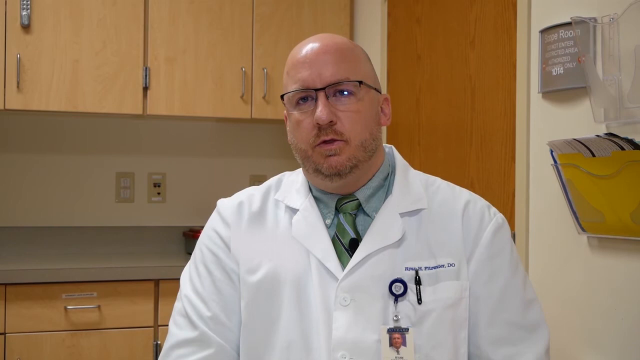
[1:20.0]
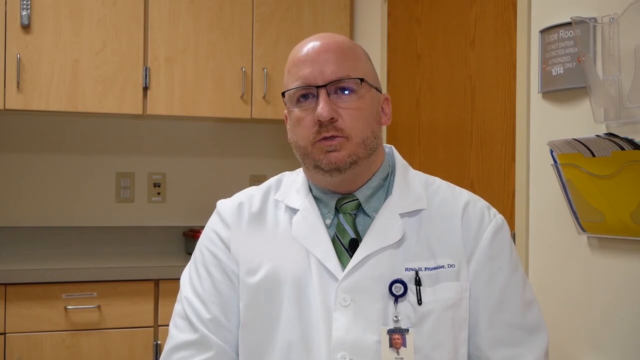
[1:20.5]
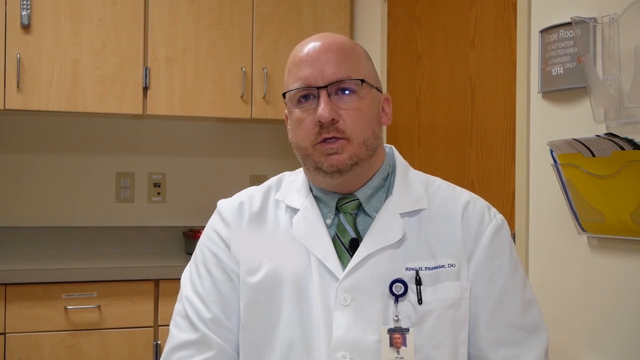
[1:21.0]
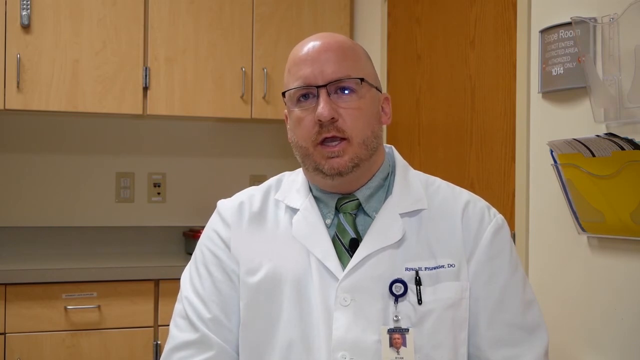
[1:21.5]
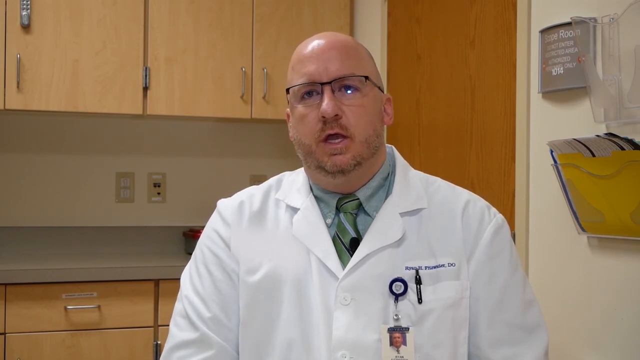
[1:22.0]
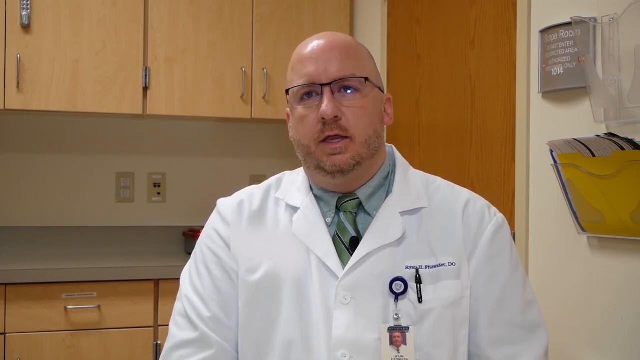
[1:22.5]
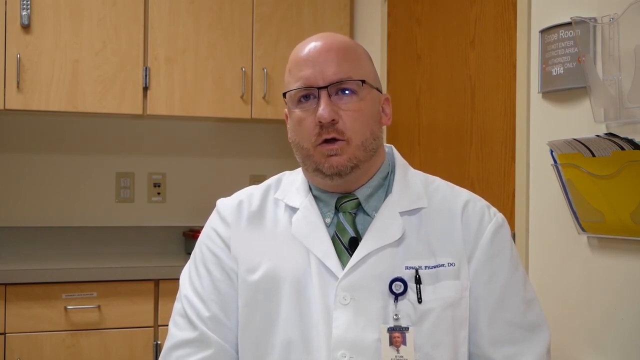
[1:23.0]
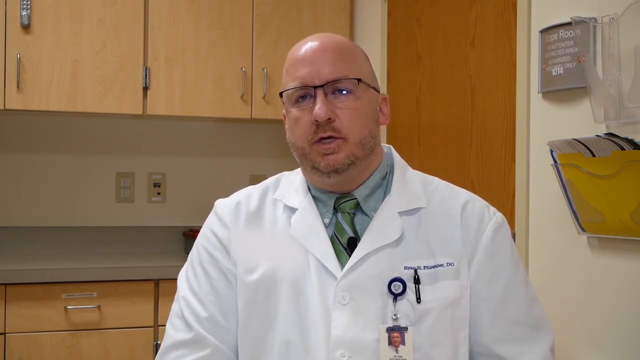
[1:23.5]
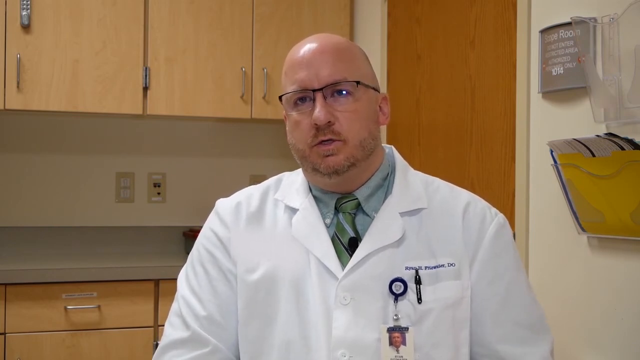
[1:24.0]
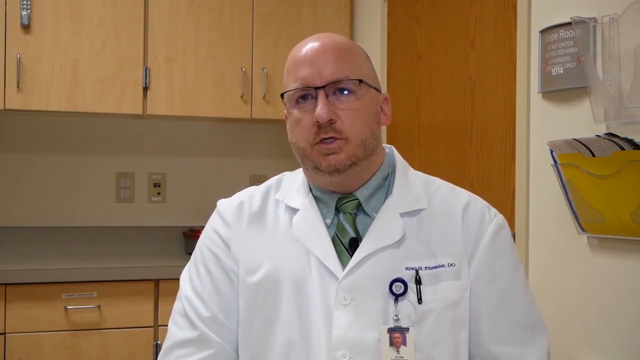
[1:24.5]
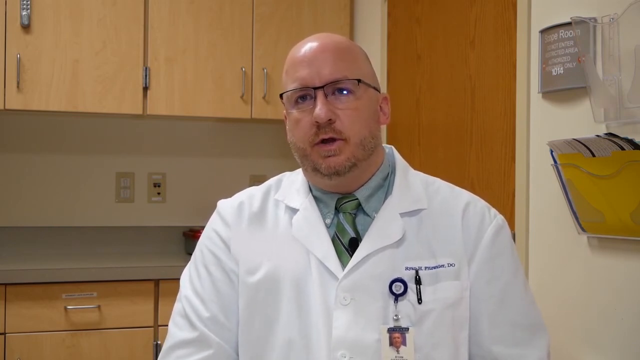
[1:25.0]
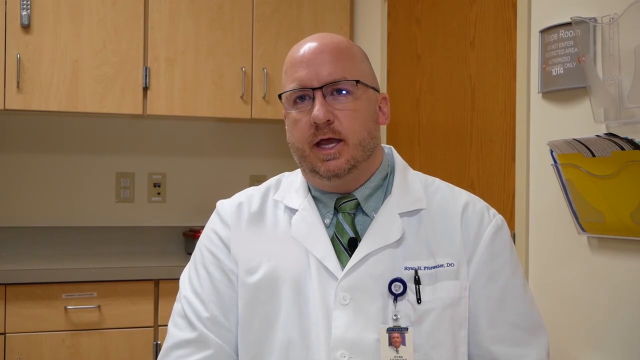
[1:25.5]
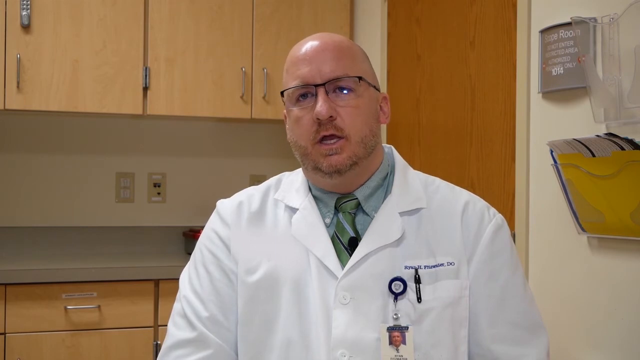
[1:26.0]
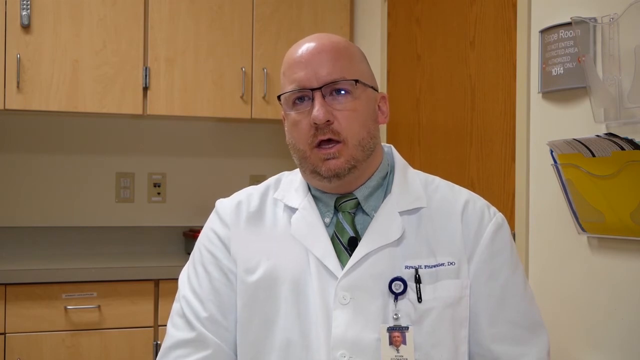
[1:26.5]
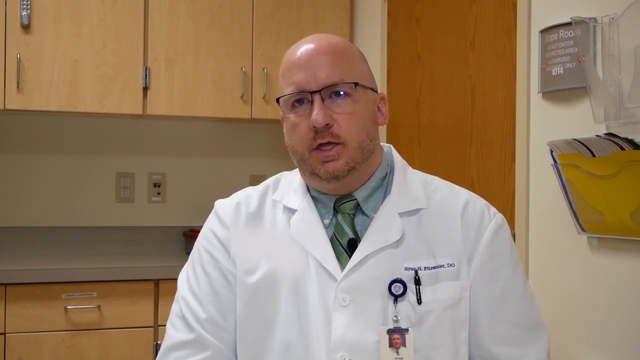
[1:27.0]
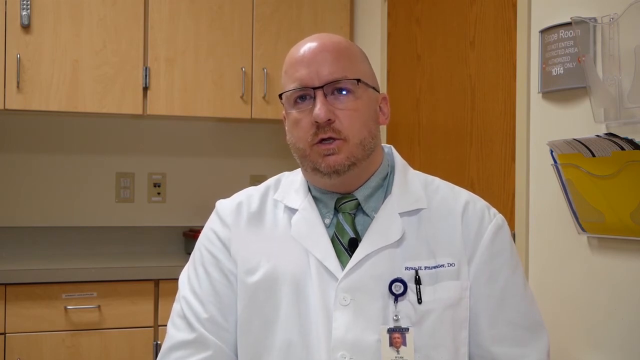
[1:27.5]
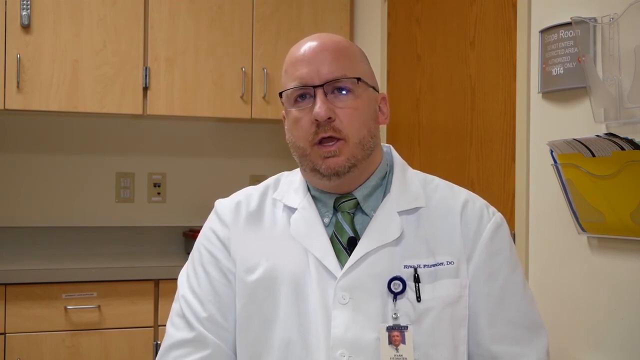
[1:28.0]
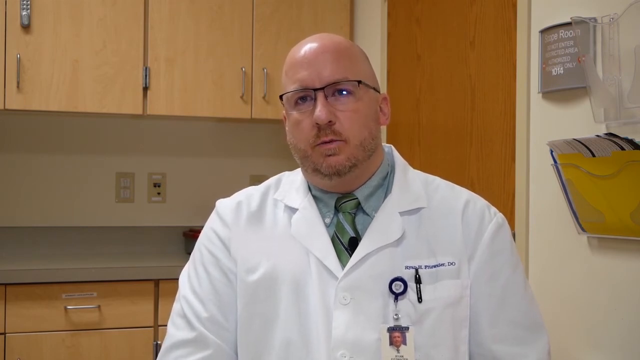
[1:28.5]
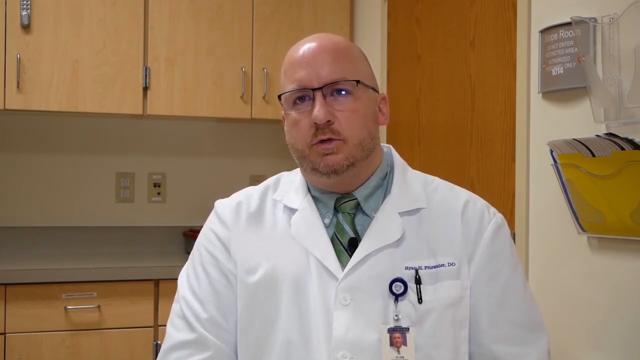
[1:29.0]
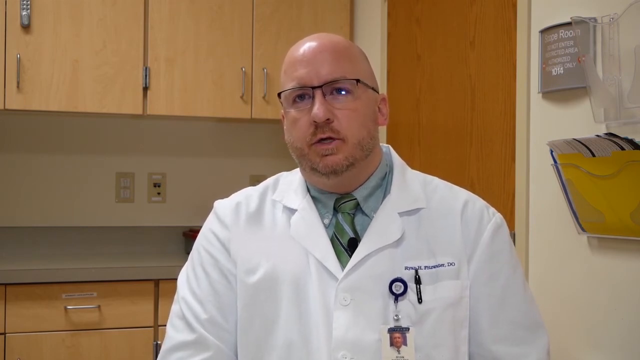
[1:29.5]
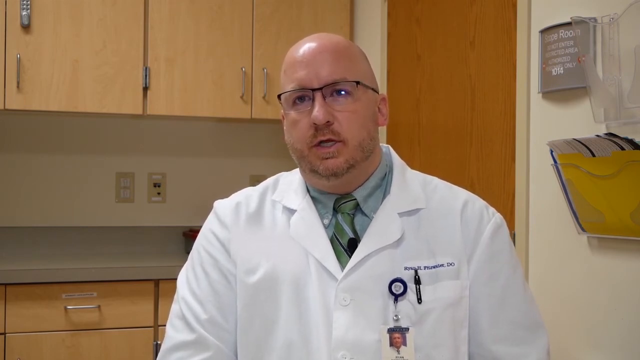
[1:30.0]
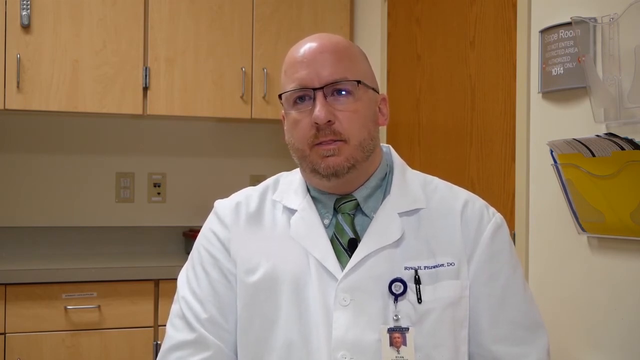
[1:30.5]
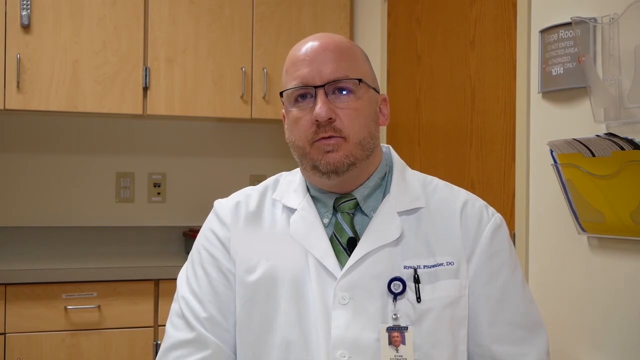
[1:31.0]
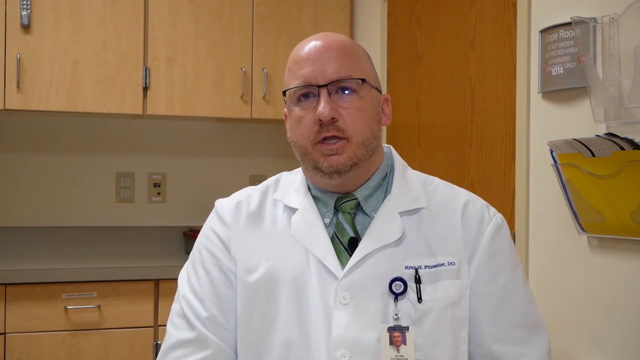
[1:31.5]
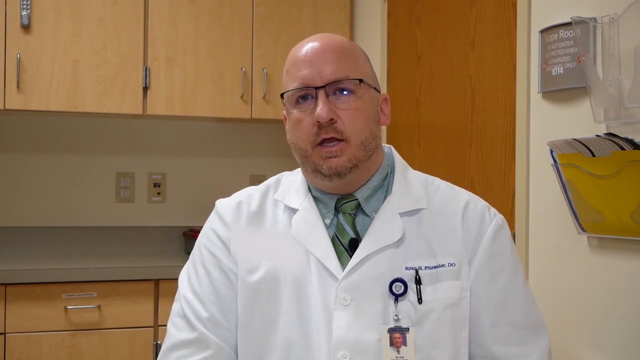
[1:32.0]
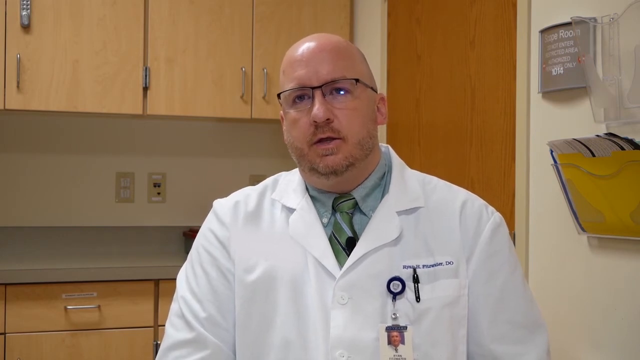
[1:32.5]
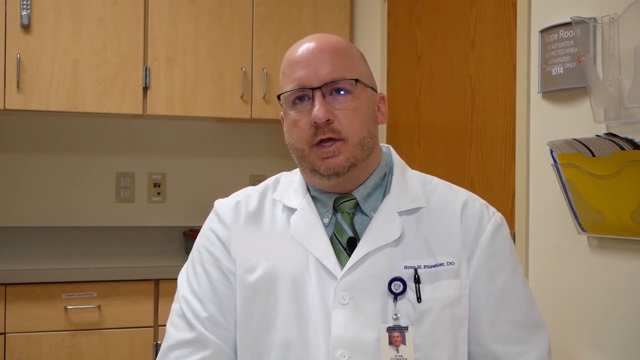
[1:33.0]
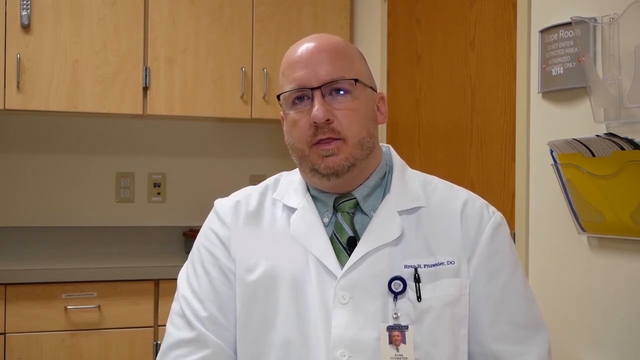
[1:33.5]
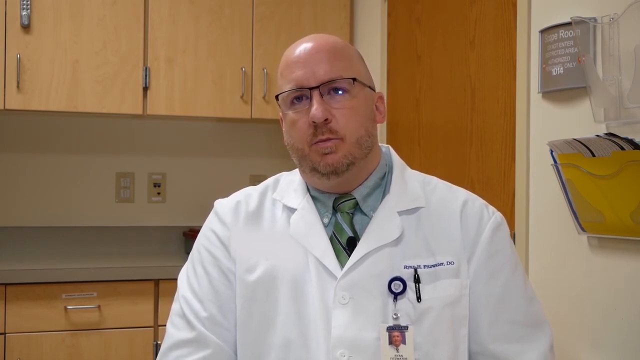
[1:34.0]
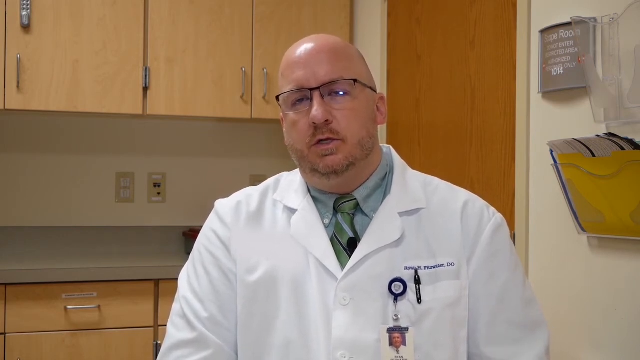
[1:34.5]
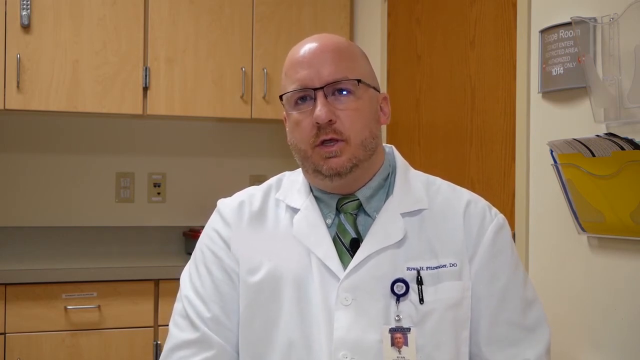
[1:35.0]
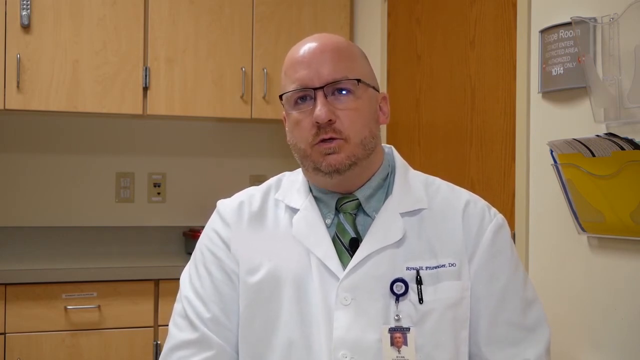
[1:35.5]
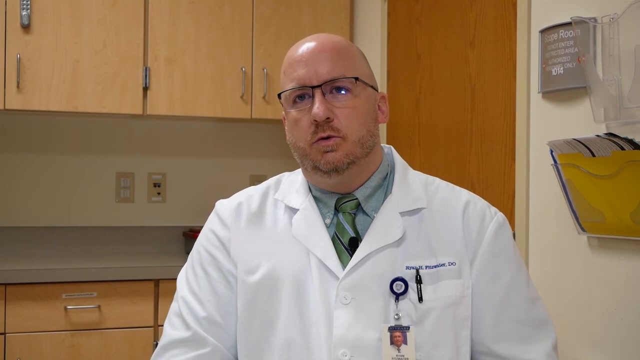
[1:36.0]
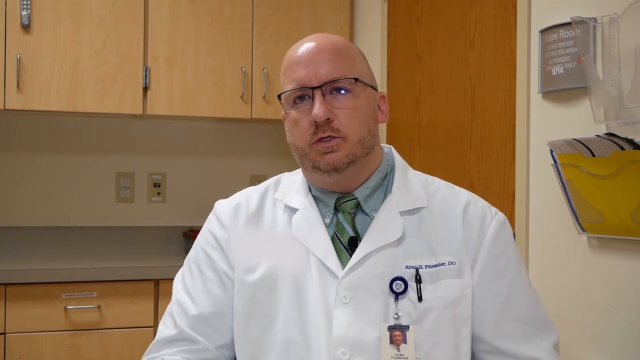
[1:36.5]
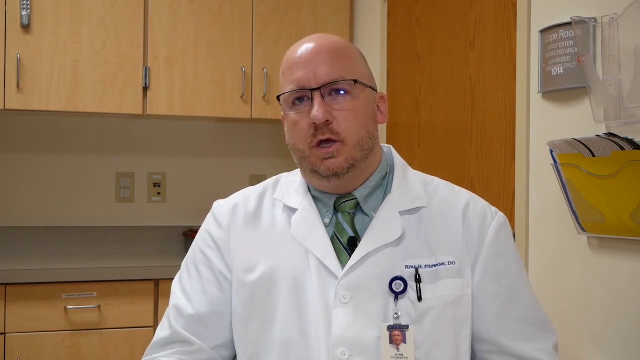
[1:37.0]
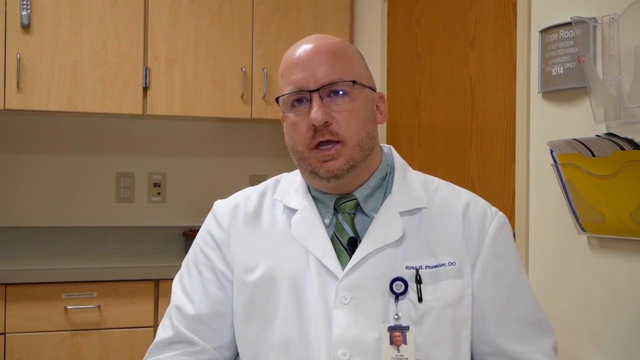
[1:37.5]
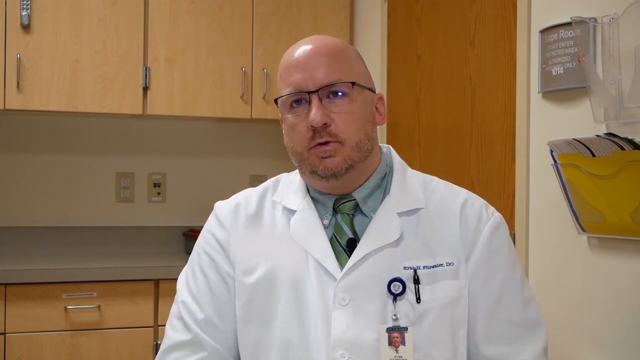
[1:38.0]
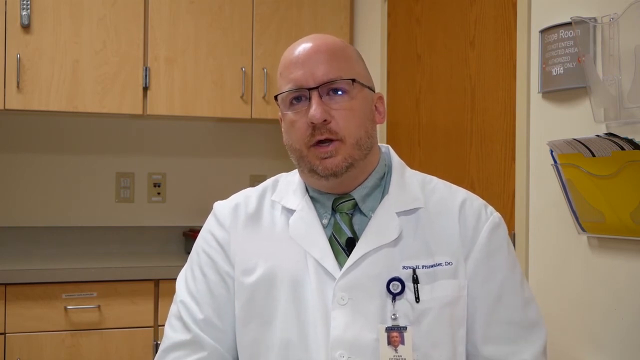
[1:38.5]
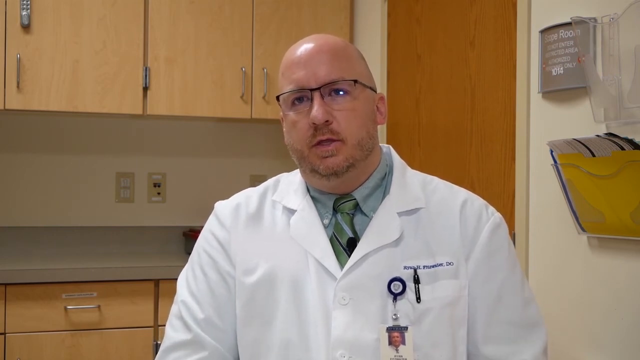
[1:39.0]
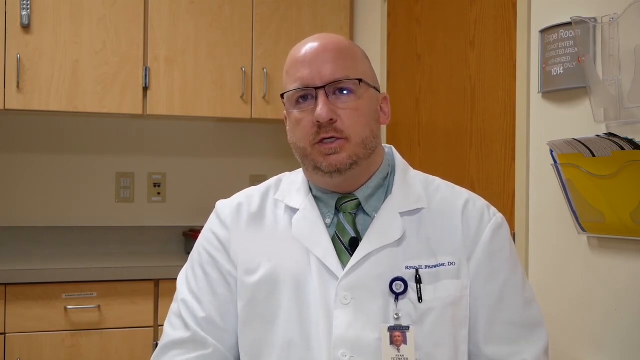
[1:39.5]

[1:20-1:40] The doctor continues to talk, looking upward to the left. Behind him to the left is a counter, cabinet doors are above and behind his head, and a wooden door is on the right side. He wears a white lab coat and is speaking. At one point he looks over to the left side, then focuses straight ahead again. While talking he slightly moves his head, and he moves his right arm around; his hand is not visible, only his arm moving. A black microphone is attached to his tie. He wears a light blue shirt underneath his white lab coat, and a black pin is attached to the front pocket of the lab coat.